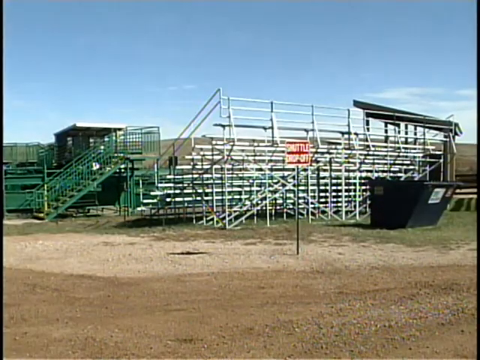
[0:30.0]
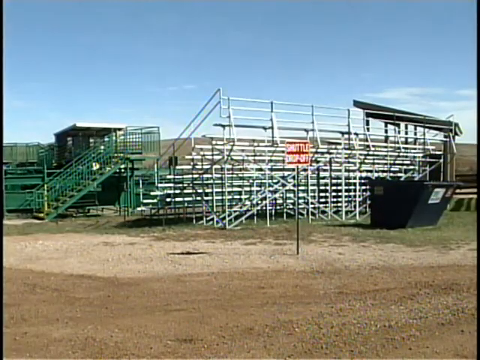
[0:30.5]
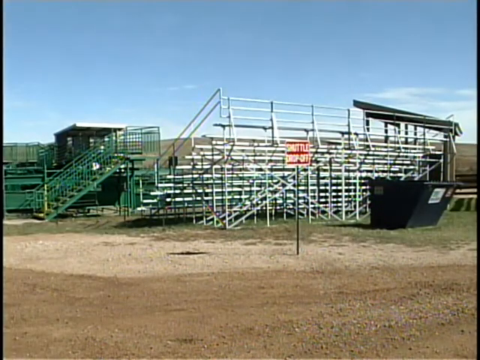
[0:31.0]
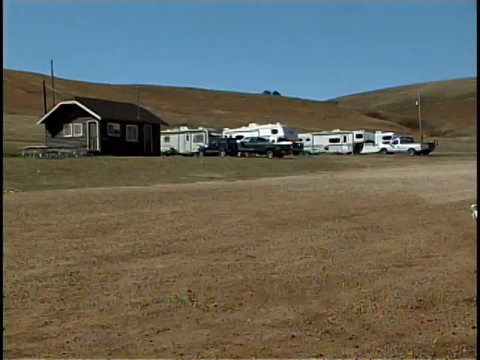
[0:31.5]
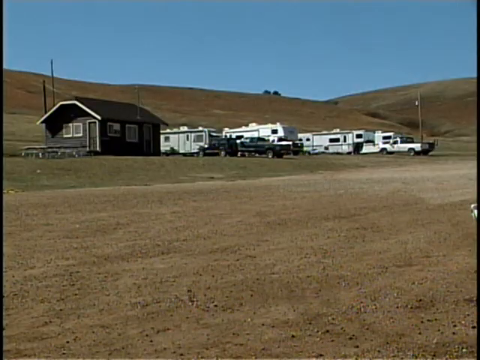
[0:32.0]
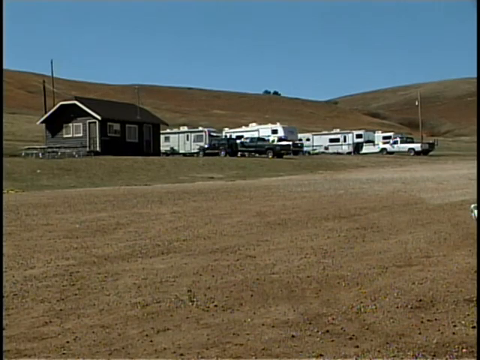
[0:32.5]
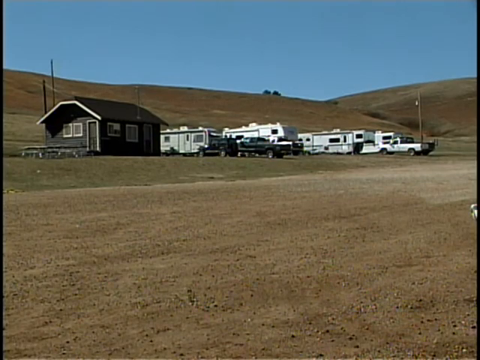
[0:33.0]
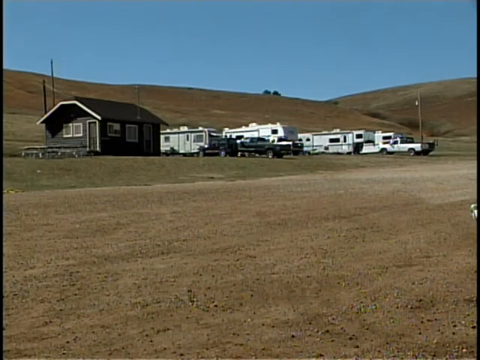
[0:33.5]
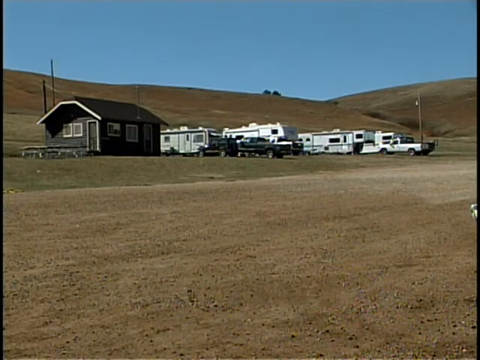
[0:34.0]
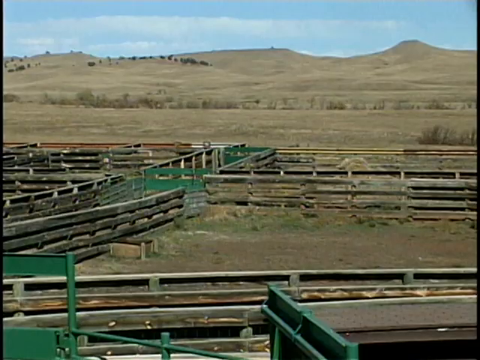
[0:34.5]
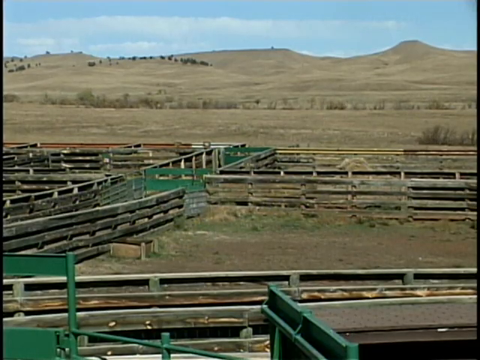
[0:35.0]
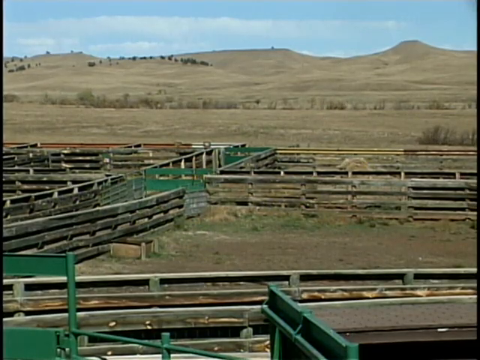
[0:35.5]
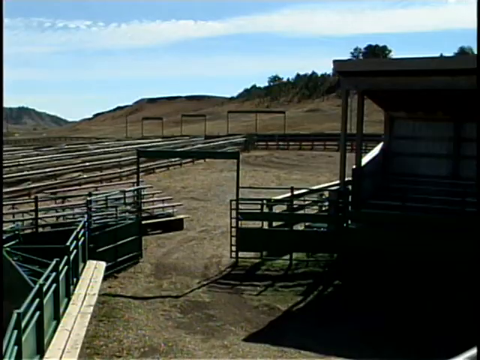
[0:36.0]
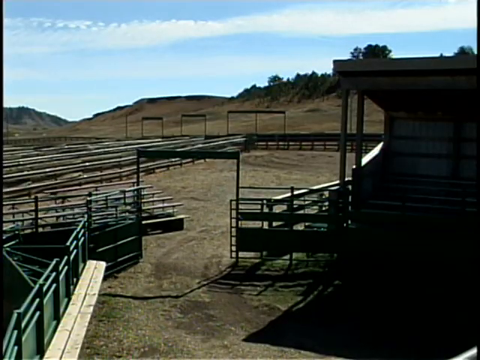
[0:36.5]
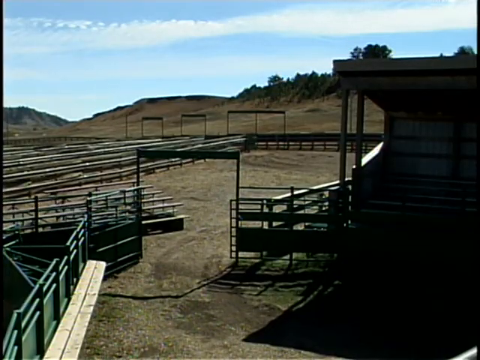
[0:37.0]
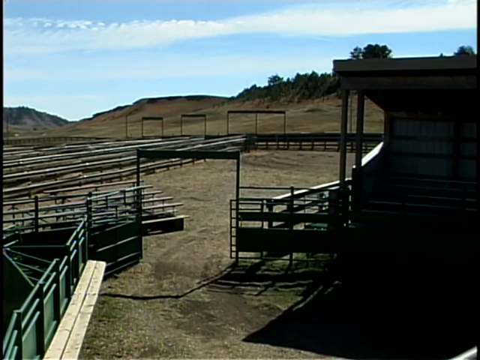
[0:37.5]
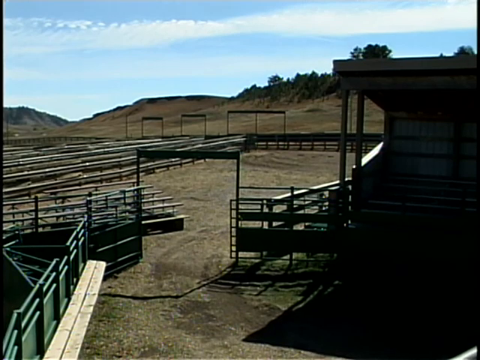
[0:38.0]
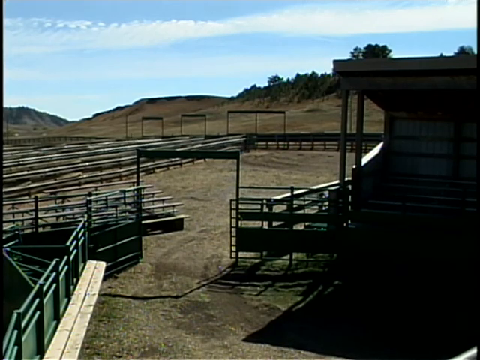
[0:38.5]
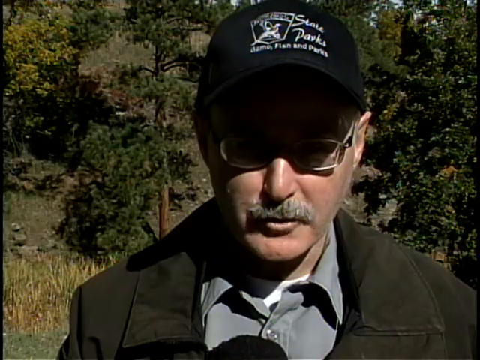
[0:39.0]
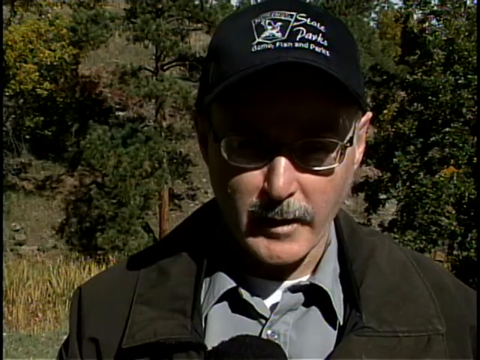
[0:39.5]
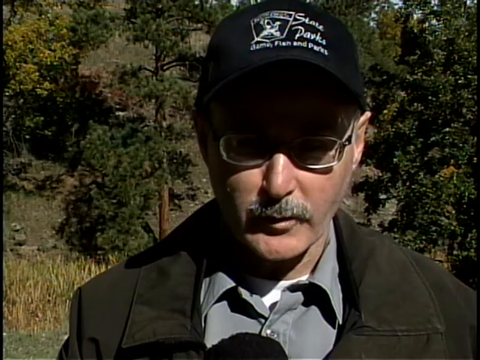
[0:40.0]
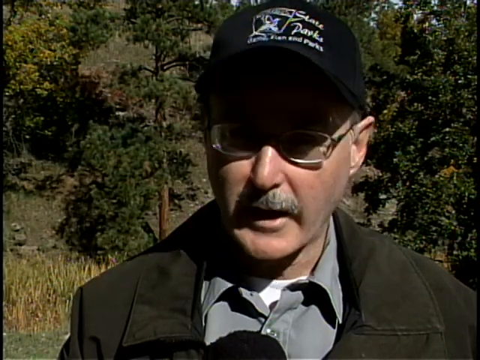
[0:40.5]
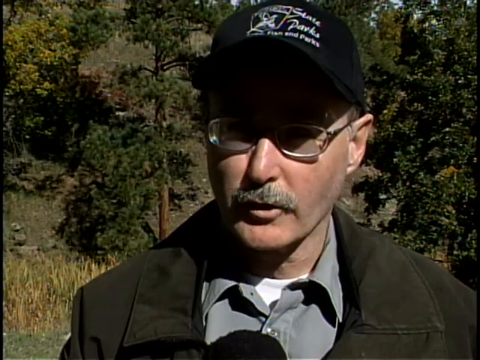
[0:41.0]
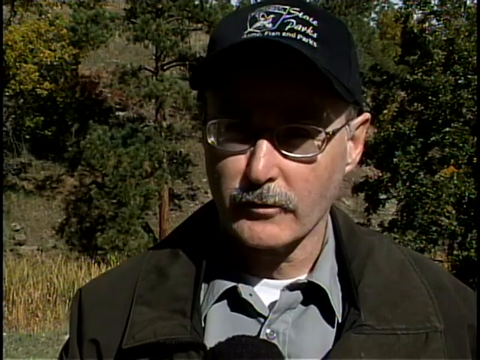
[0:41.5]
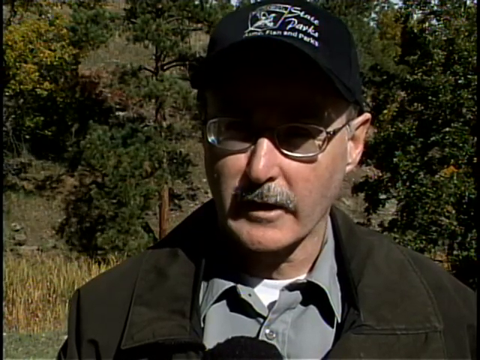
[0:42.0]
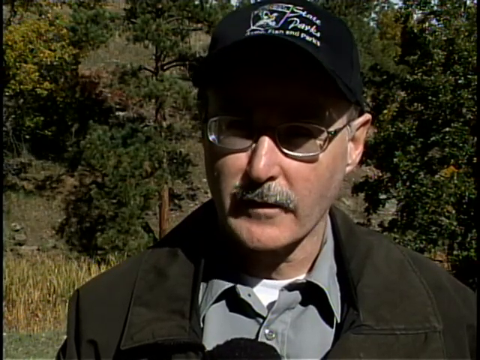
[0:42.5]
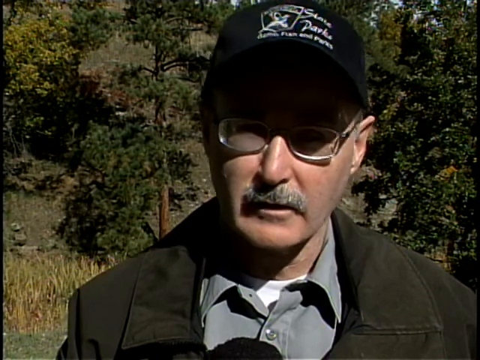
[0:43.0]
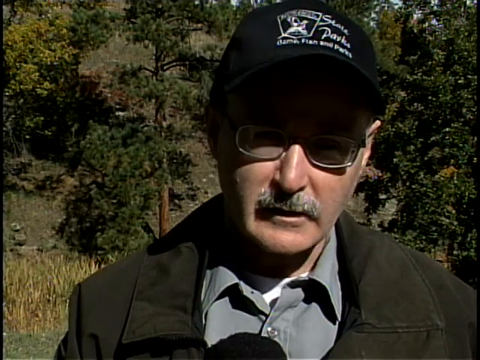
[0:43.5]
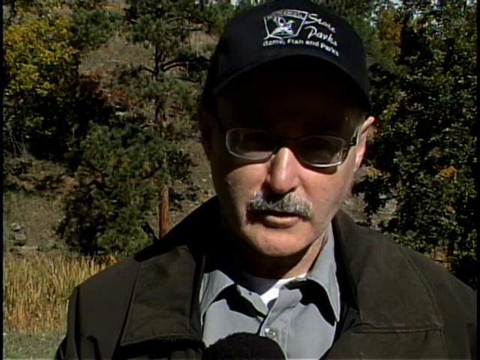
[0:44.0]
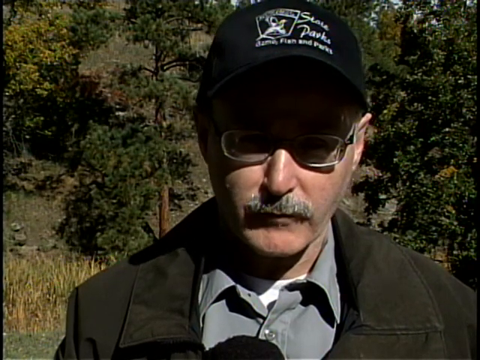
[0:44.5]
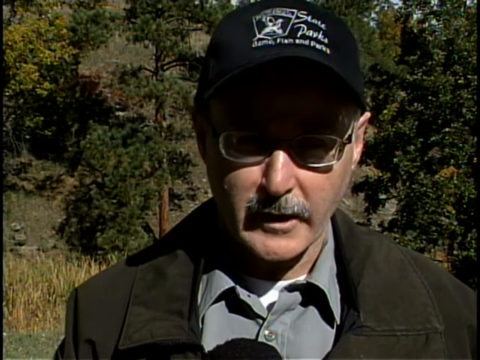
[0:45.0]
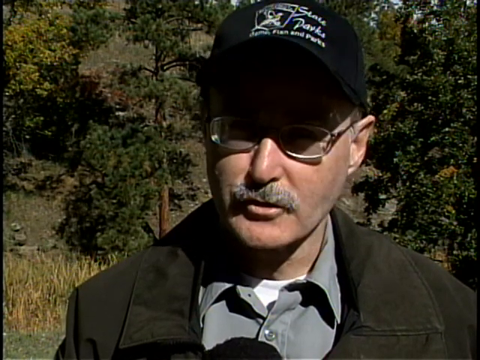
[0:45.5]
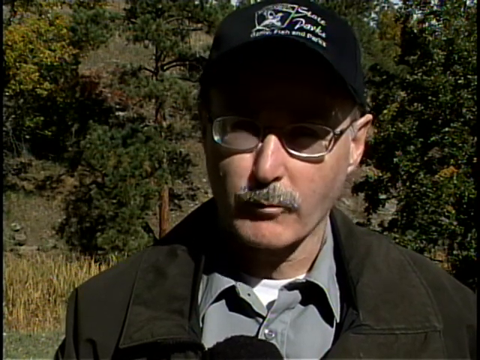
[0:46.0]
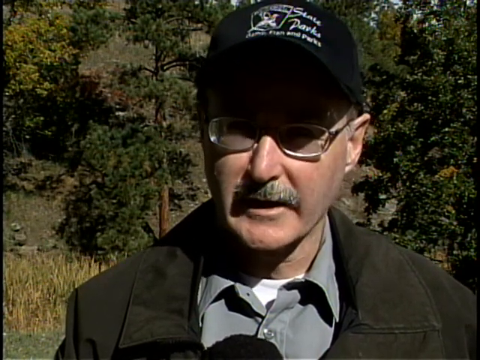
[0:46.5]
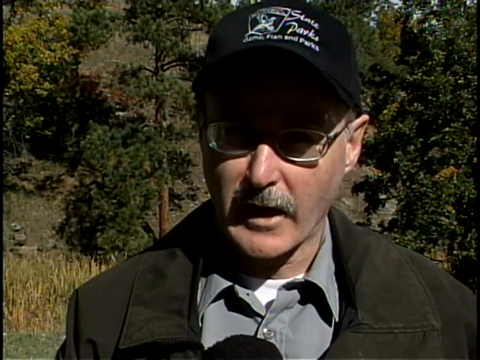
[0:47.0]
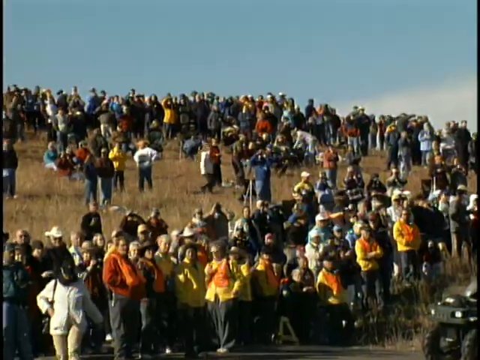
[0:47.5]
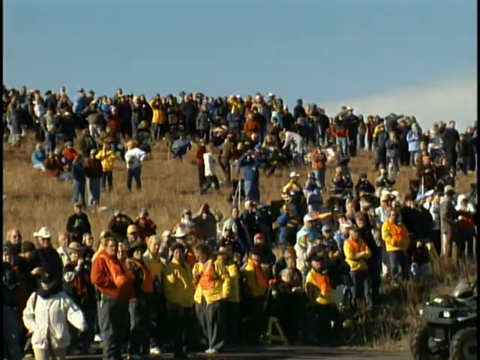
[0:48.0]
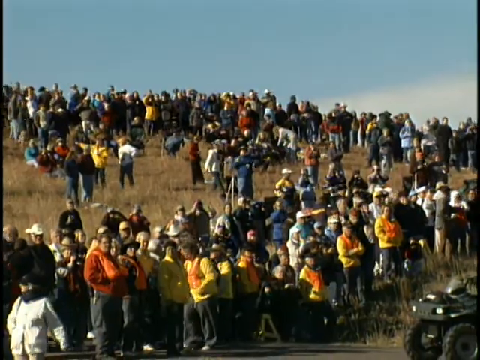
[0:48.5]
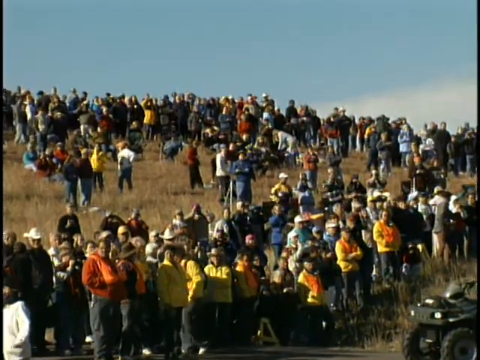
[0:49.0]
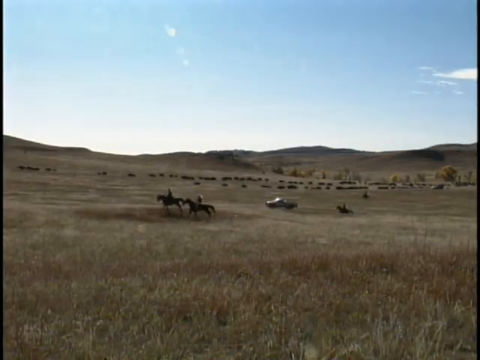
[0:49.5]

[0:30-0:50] Structures made of thick metal rods stand in the field, looking like houses with stairs. There are two of them, one made of white metal rods and the other of green metal rods, with stairs of metal or steel that can be used to climb up to the platform. Another house, this one enclosed, appears, and beside it are four parked vehicles: three pickups and another car. Beside the vehicles is a white mobile truck. Later the video focuses on a middle-aged man with a cap talking to the camera.